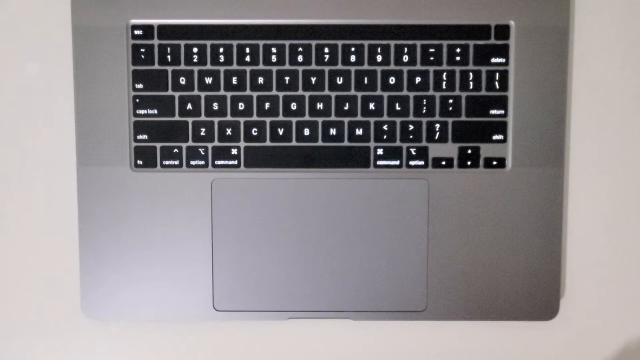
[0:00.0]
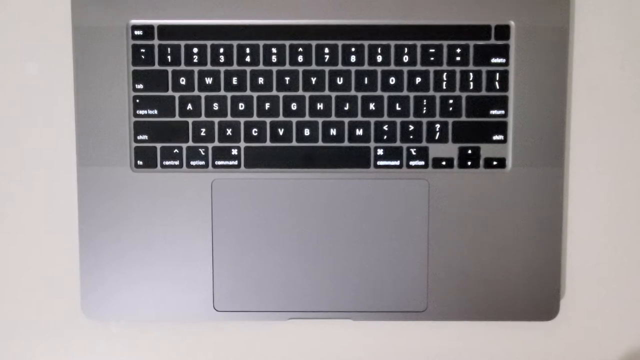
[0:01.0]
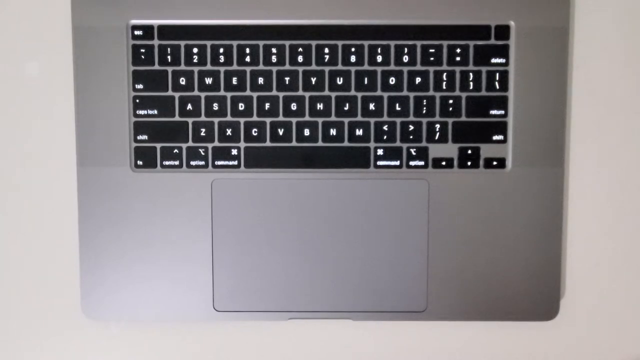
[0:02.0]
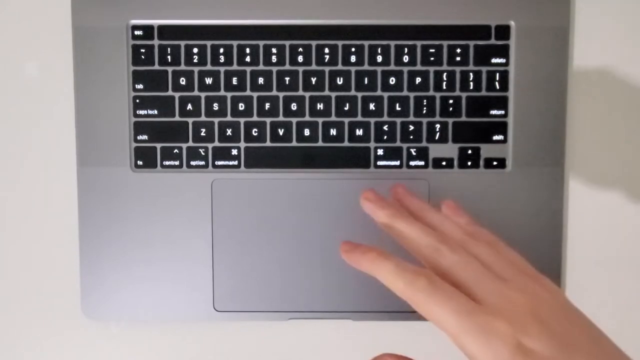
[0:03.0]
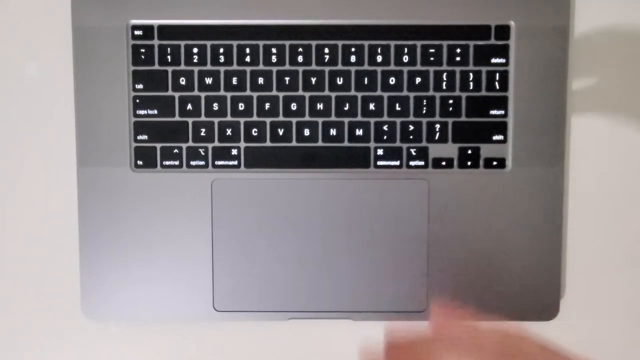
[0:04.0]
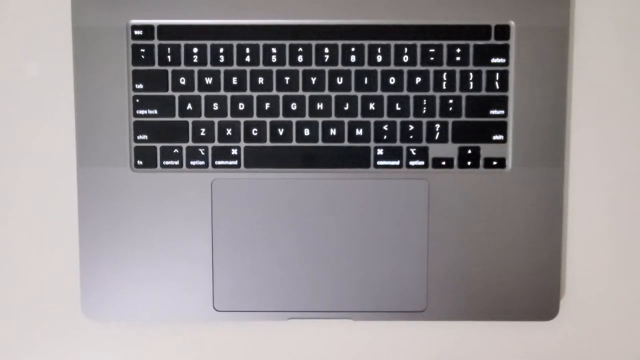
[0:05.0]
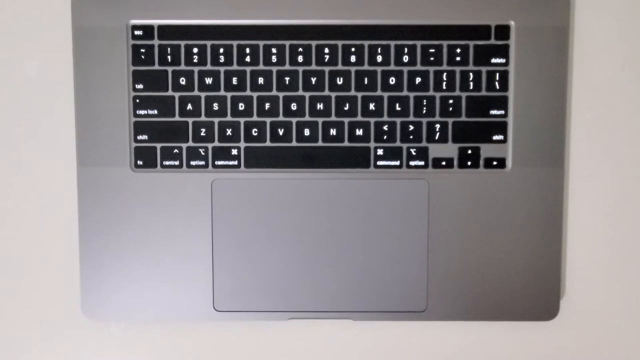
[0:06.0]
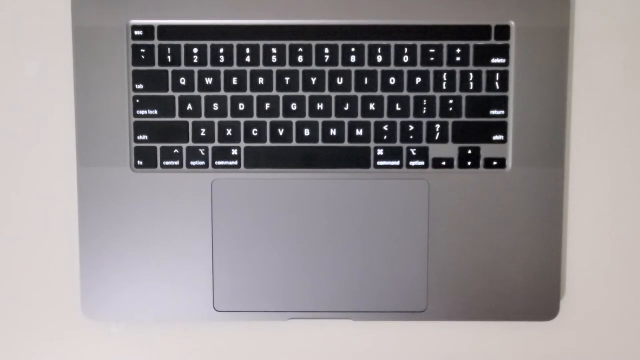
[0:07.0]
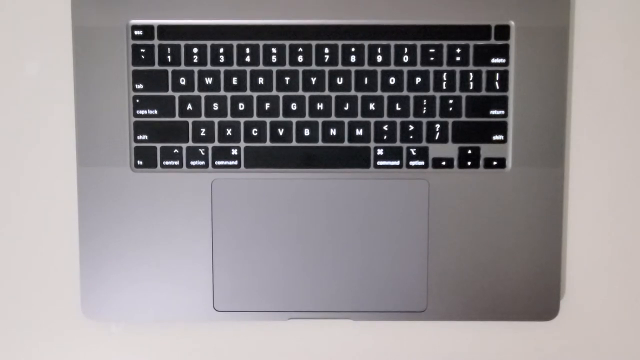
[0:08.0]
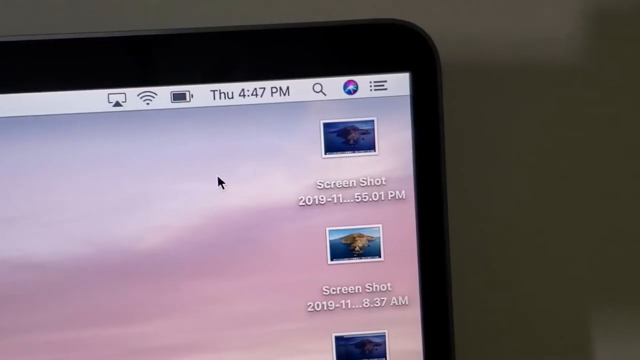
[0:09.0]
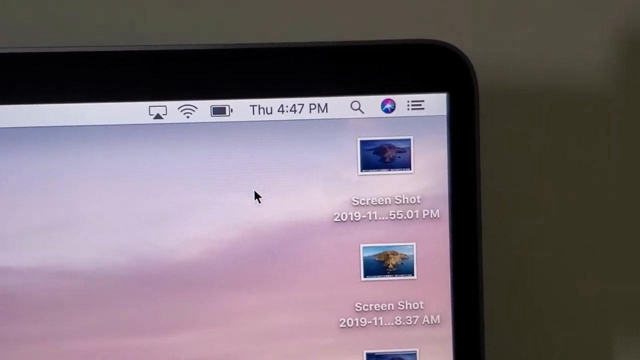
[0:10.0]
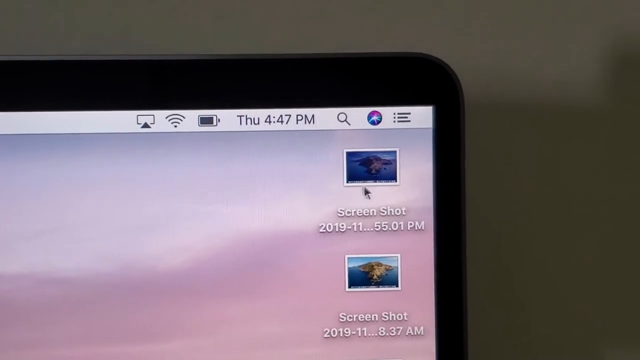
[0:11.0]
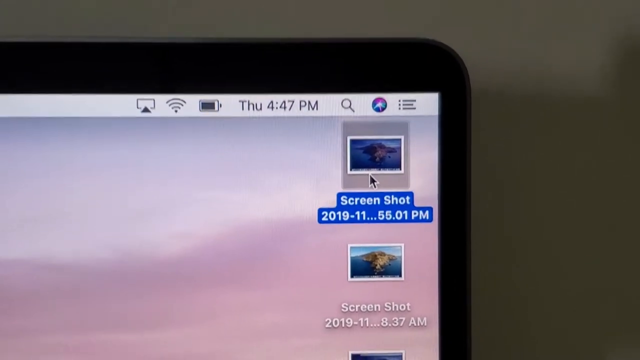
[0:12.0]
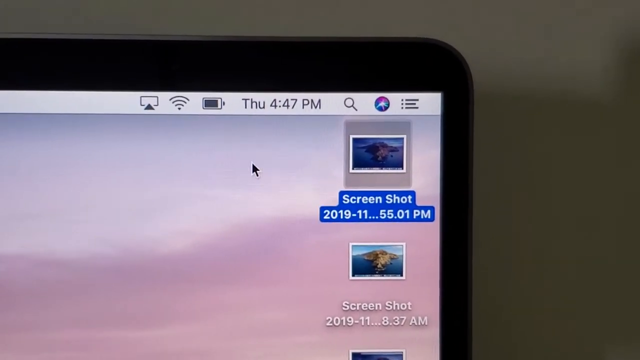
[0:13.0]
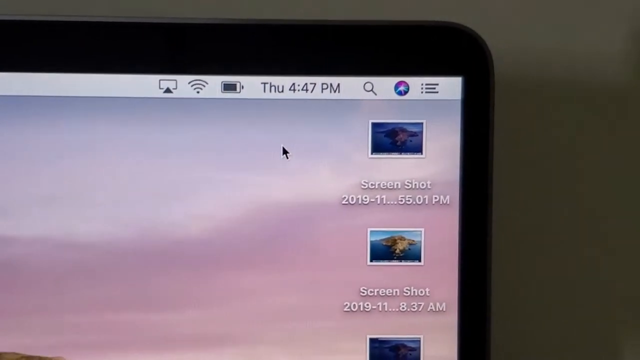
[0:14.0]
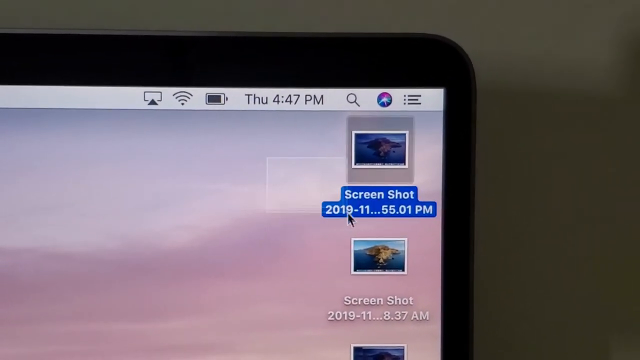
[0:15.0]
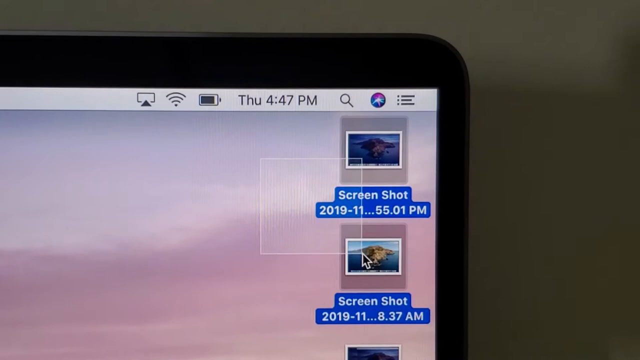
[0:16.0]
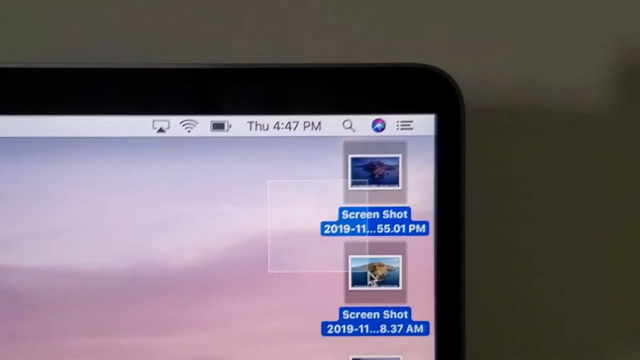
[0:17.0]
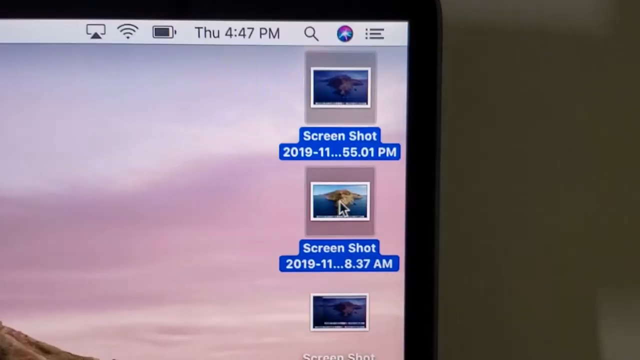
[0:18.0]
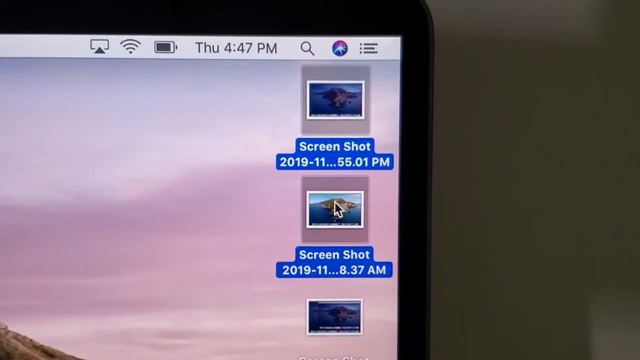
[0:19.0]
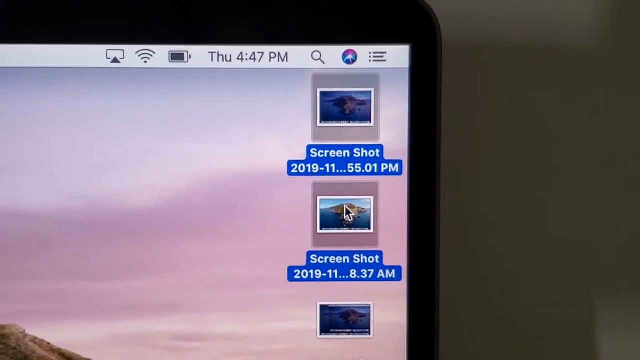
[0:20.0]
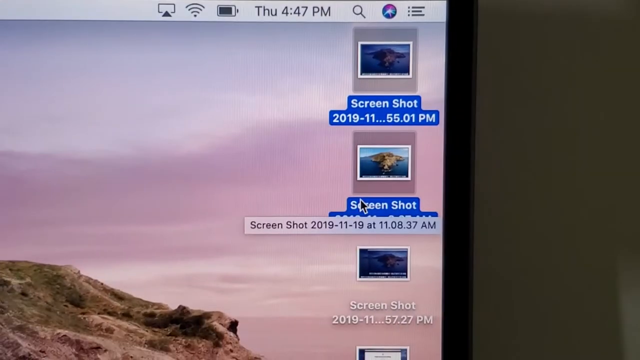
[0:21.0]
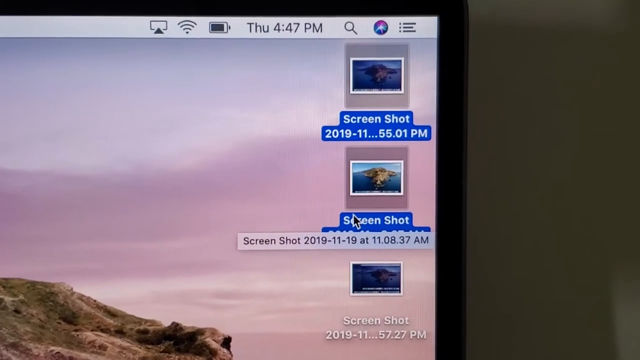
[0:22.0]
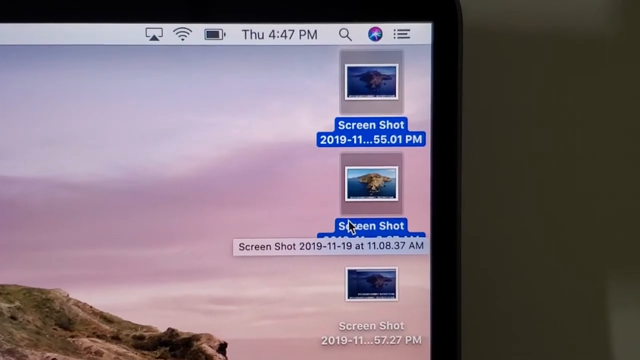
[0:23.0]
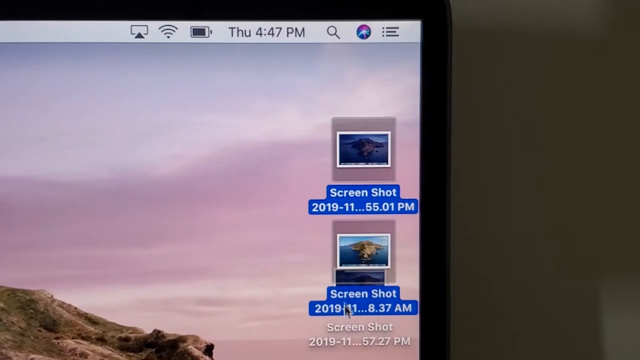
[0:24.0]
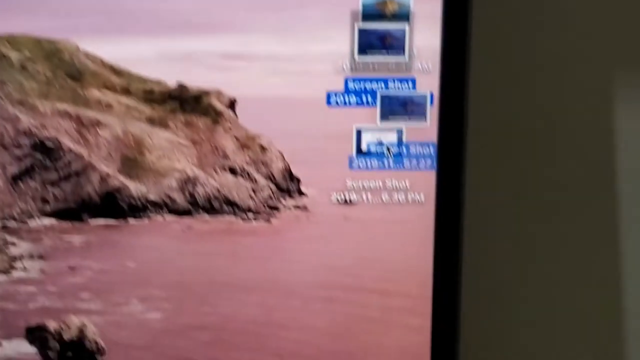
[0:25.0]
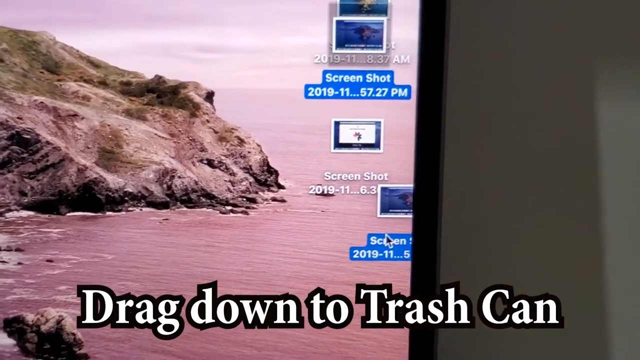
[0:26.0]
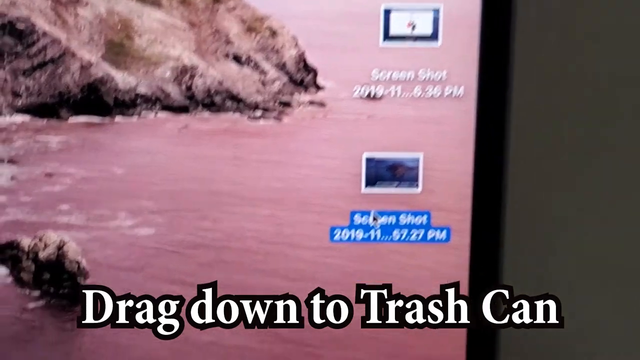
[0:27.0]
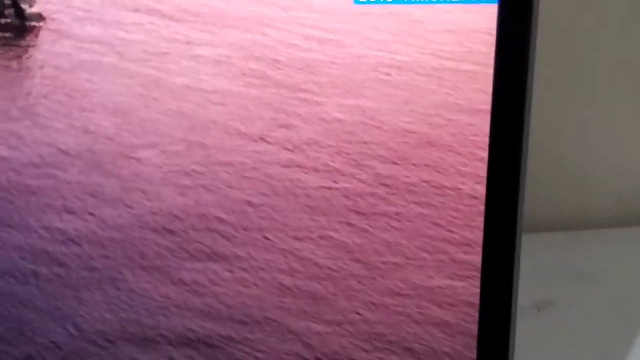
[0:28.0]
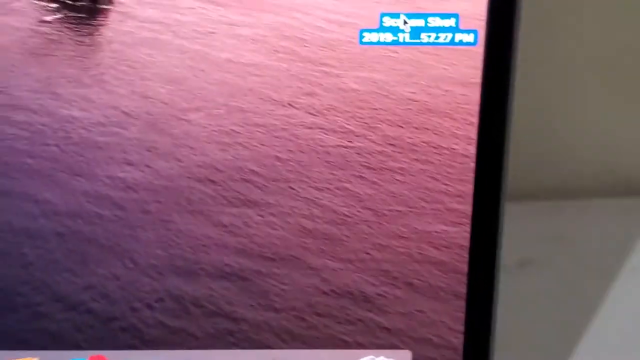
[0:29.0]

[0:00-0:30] A silver MacBook laptop is displayed, and its trackpad is visible with the user's finger, very white. The screen shows the Wi-Fi icon, the battery, and the day, date and time, "Thursday 4.47 PM", along with what seems to be a Siri icon. There are a couple of screenshots on the desktop, apparently three. The user highlights two of the screenshots and drags them down to the trash can. On-screen text reads "can't drag and want to enable, check link in the description." The user apparently is demonstrating how to select and drag, directing anyone having difficulty to the link for help.